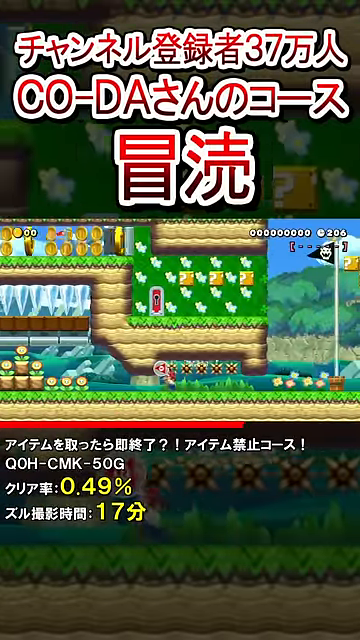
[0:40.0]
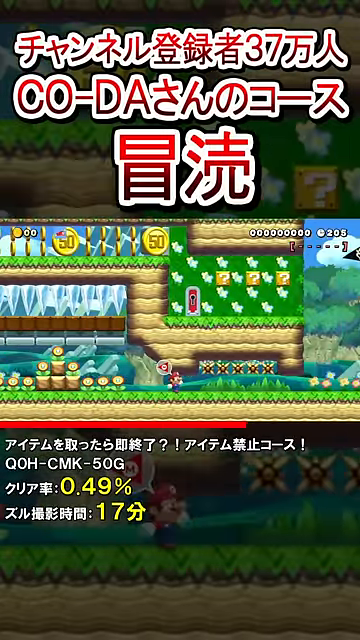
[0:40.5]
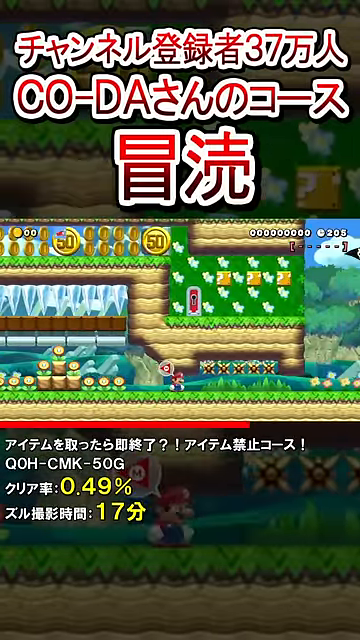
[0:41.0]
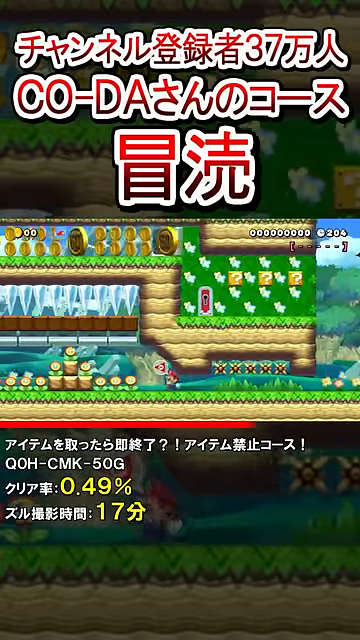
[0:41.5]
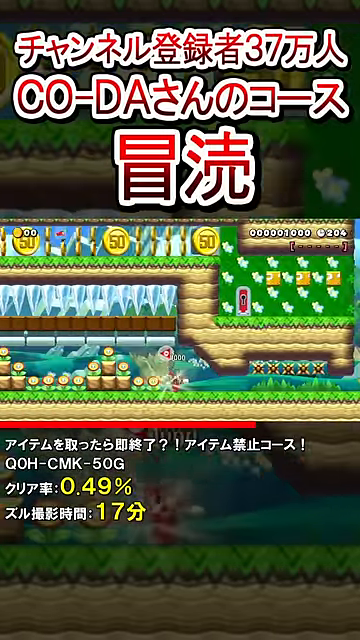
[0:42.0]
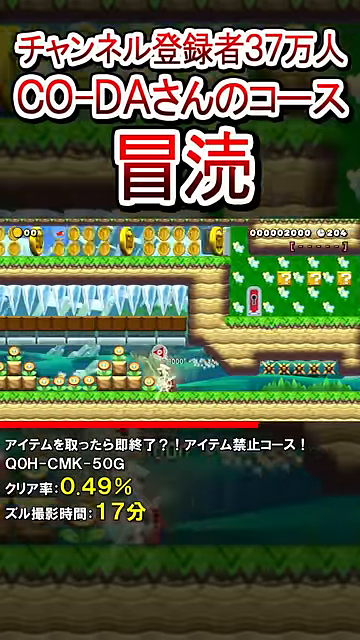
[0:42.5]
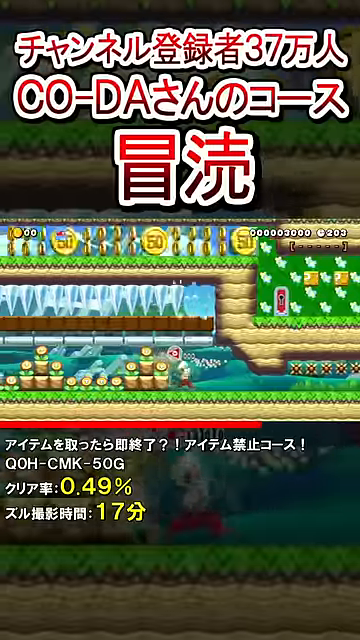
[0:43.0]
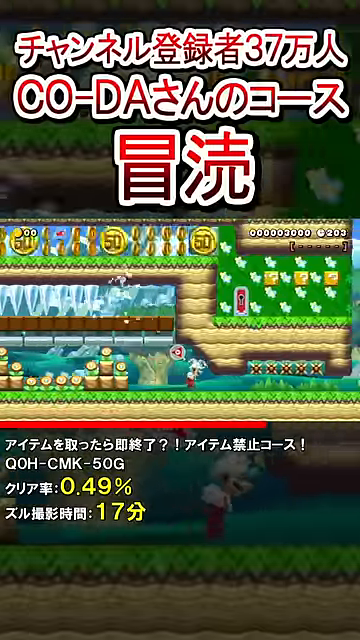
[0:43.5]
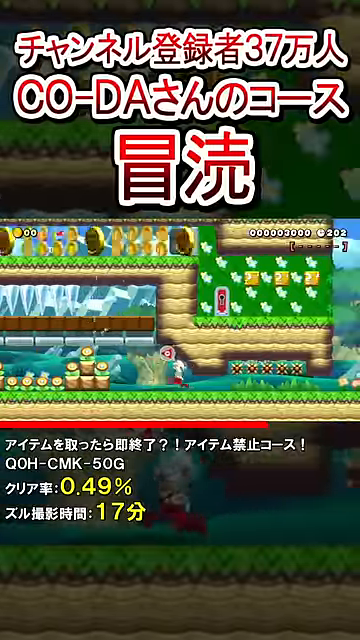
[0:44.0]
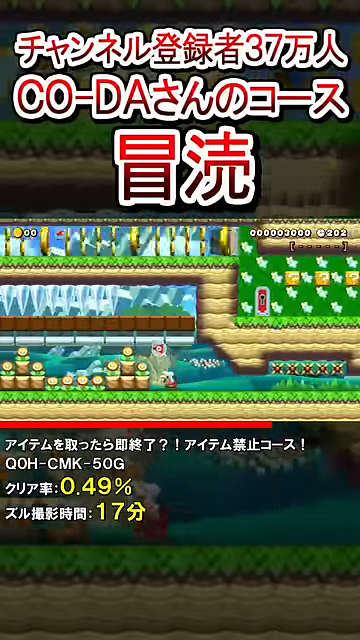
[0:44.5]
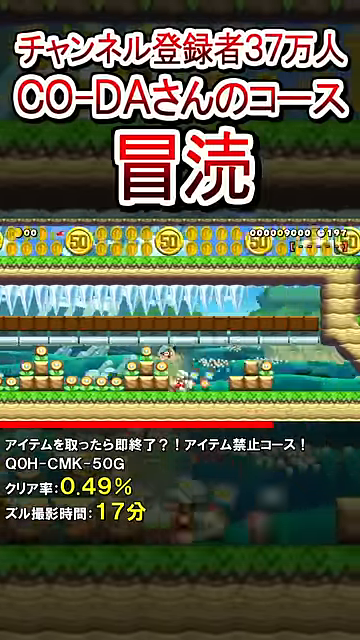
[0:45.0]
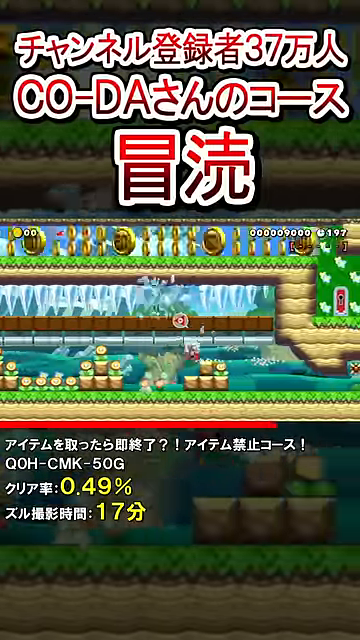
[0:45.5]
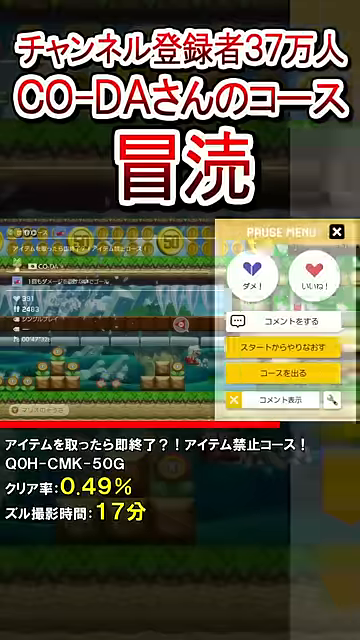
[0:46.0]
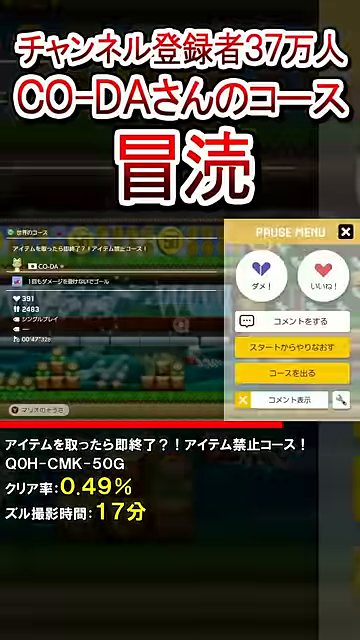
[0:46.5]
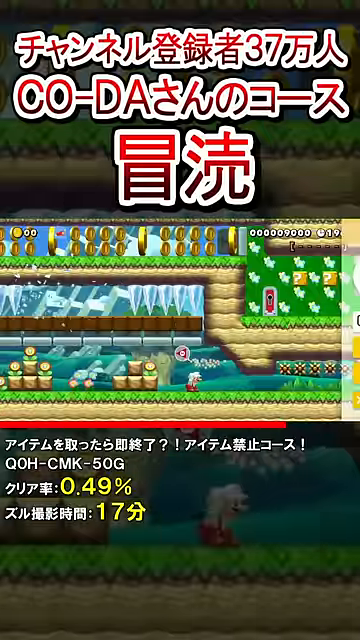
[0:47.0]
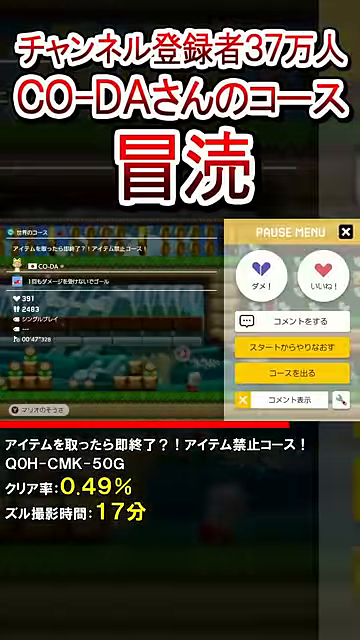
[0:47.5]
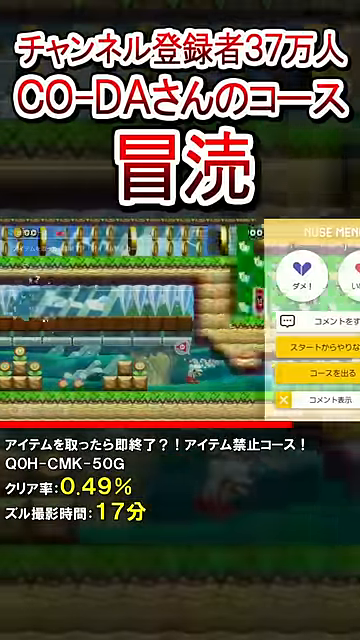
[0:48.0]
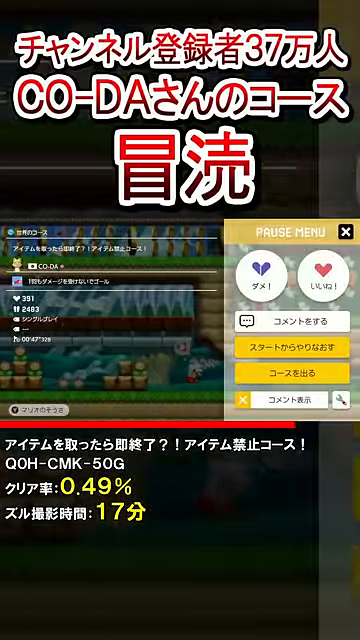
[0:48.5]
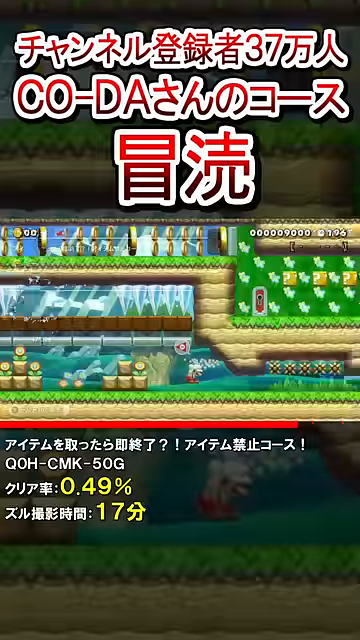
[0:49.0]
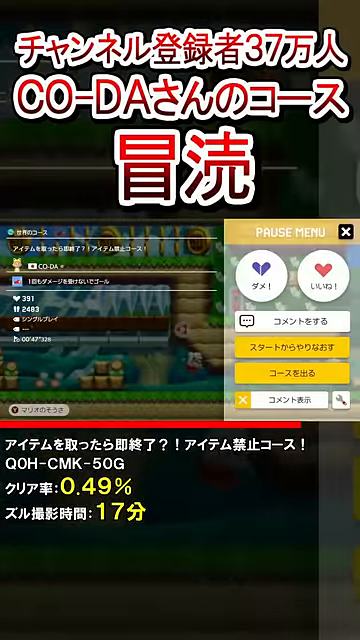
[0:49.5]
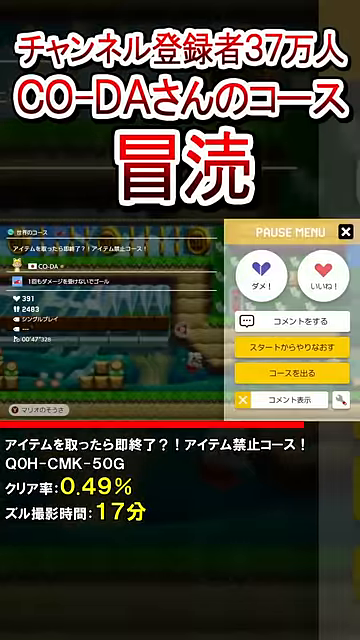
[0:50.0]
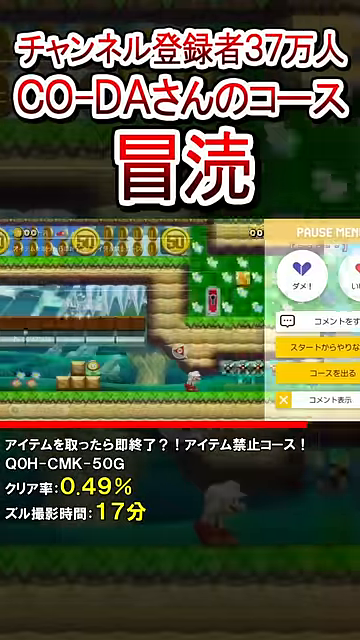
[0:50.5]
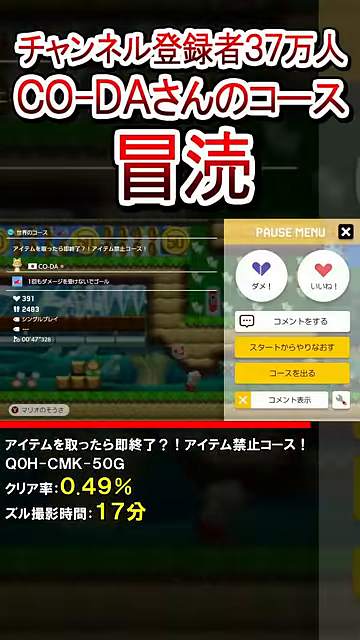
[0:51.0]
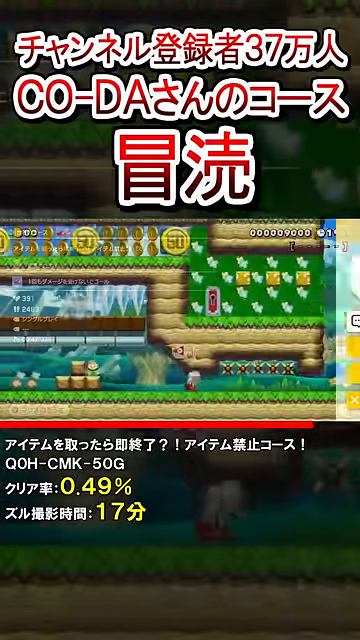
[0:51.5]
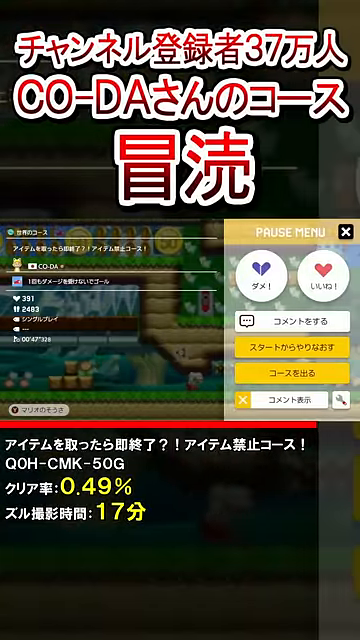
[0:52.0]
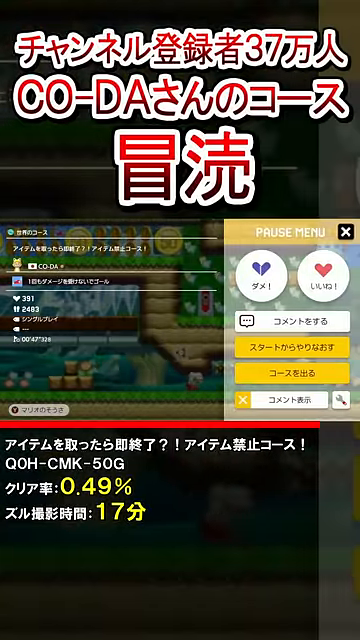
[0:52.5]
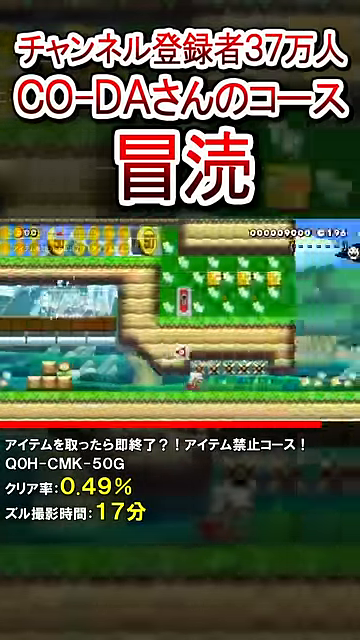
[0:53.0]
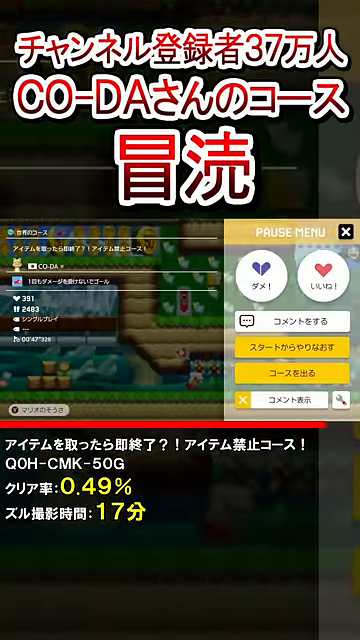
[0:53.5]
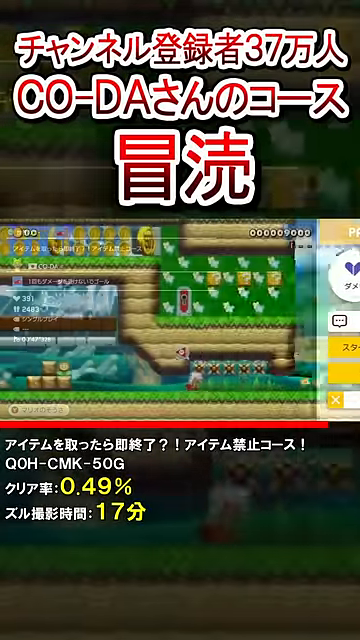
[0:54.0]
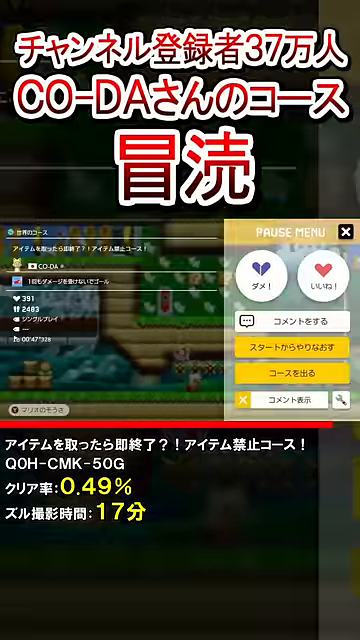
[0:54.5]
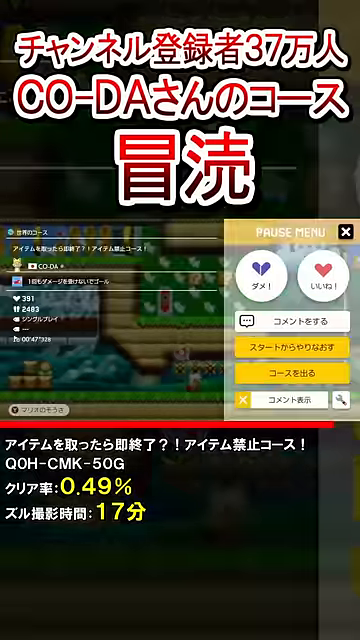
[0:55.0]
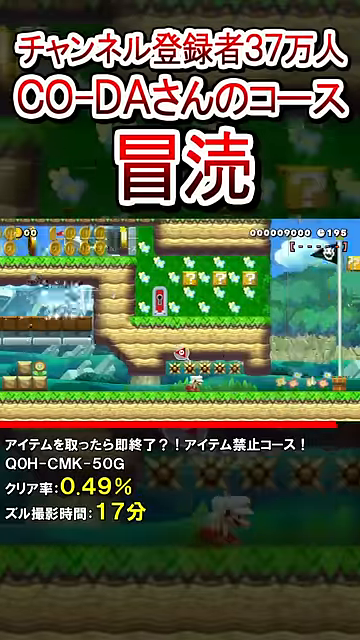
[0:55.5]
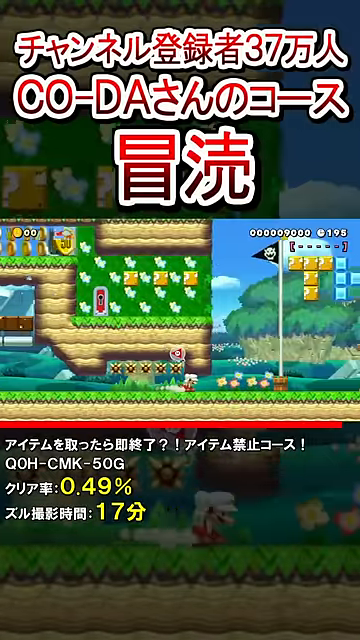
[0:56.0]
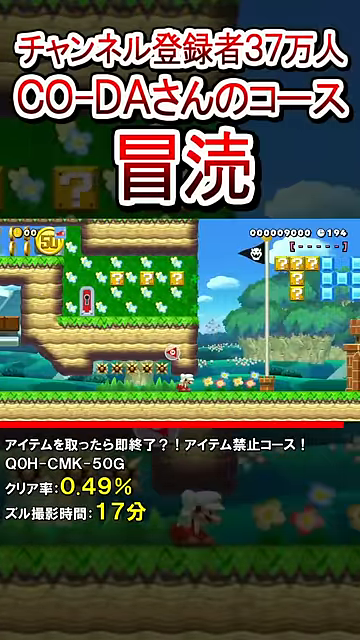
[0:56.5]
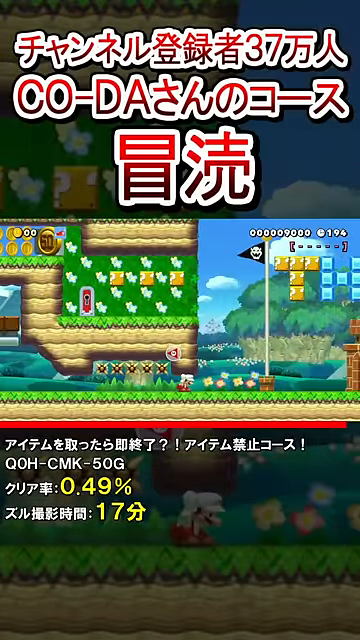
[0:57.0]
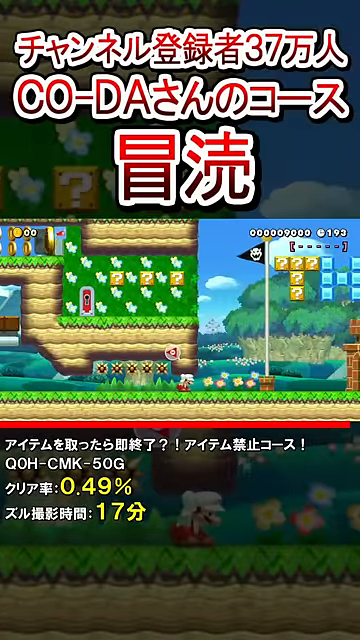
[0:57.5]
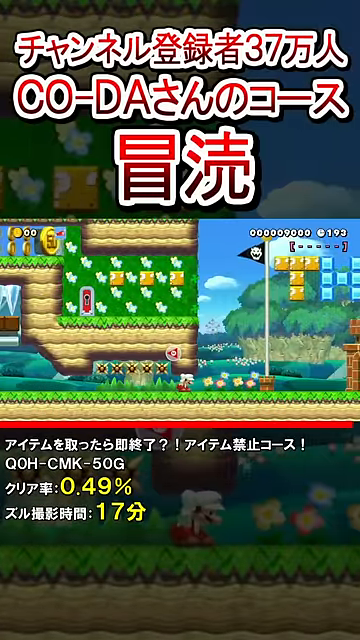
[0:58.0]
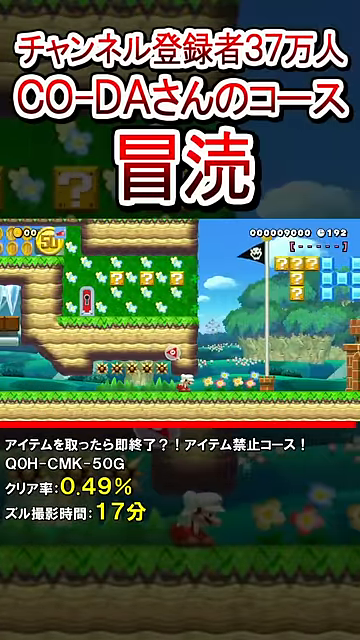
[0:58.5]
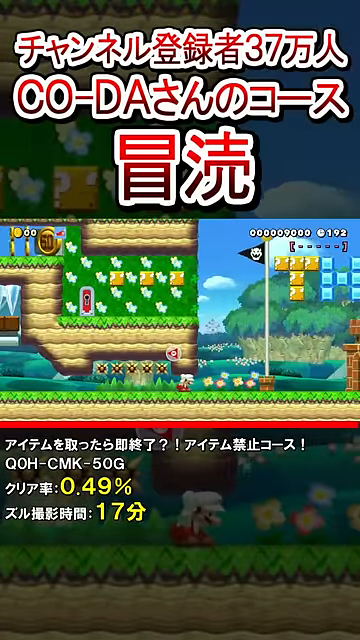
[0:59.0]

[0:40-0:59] In the same part of the game, after Mario has ducked underneath the walls, he picks up some of the power-ups that are under or on the other side of the walls. He runs into some barrels and appears to pick up power-ups or points. A panel then slides in from the left side of the screen, possibly showing game stats or information; everything in it is in Japanese, and it has several buttons and an exit button at its upper right. It looks like the panel is then exited. This area seems to be one where the video gives instructions on how Mario can get in: Mario has to duck and kind of slide and run underneath the low-hanging ceiling areas to reach the power-ups on the other side.